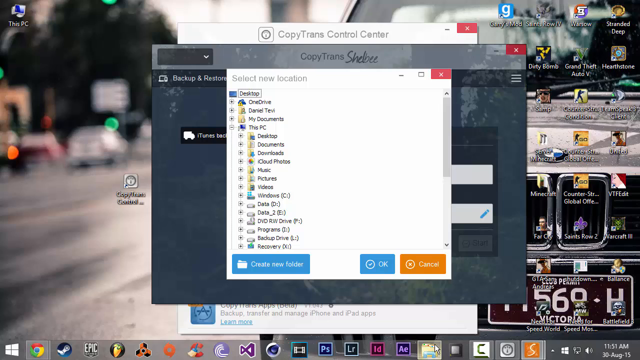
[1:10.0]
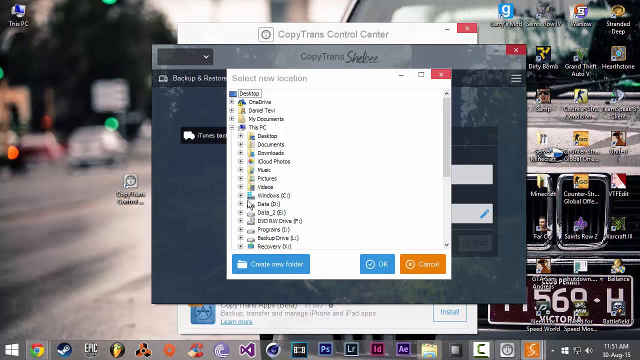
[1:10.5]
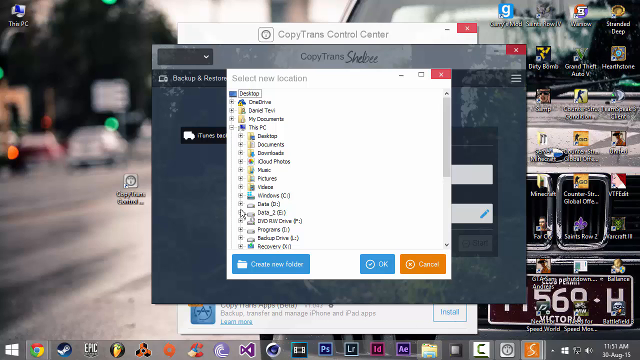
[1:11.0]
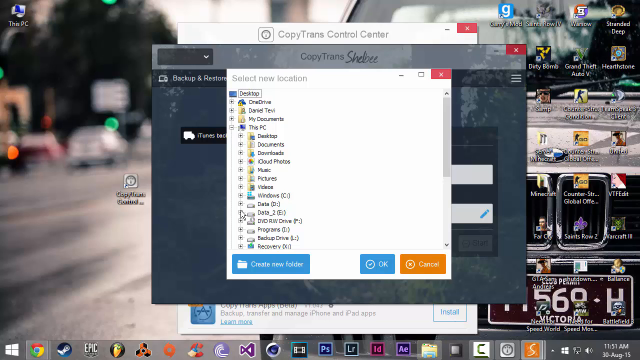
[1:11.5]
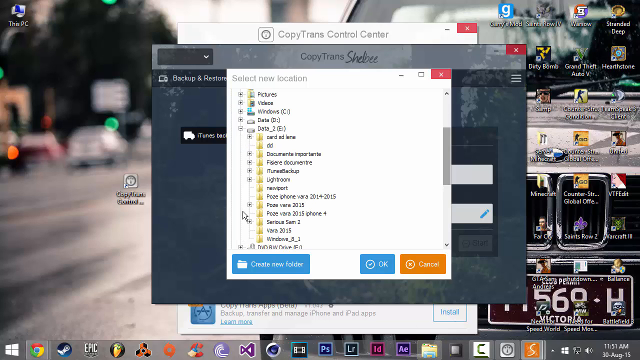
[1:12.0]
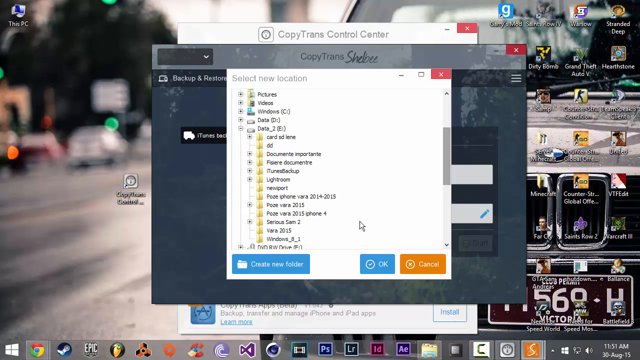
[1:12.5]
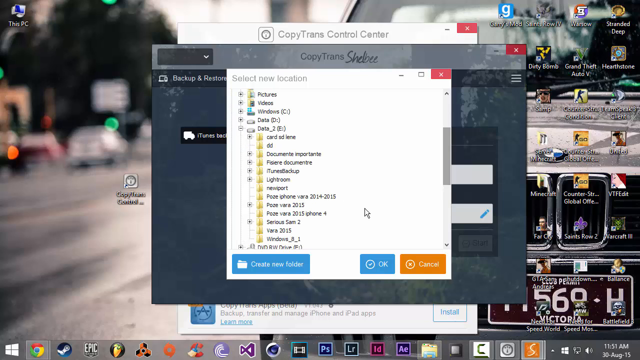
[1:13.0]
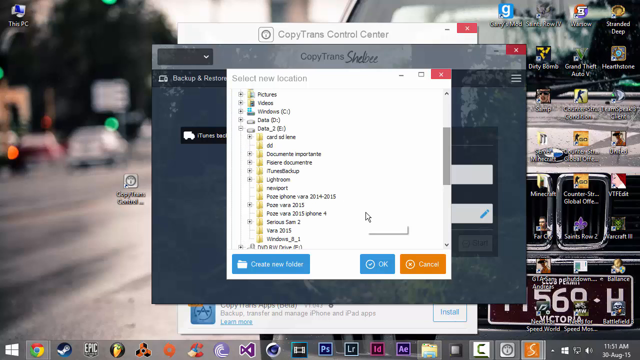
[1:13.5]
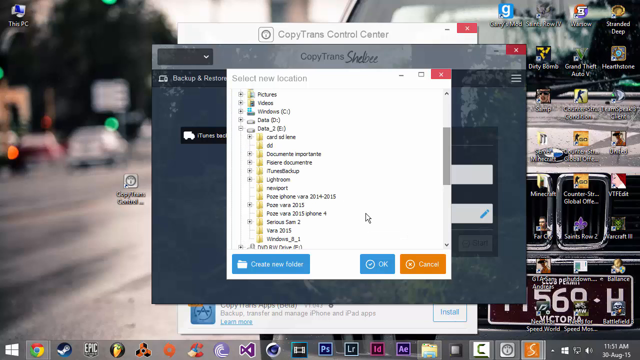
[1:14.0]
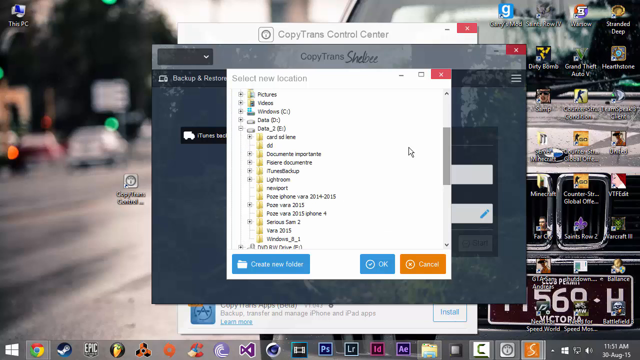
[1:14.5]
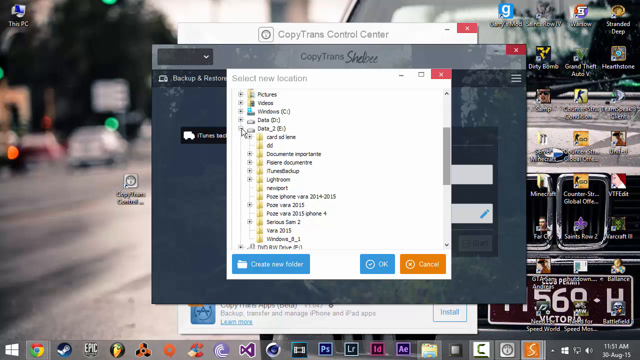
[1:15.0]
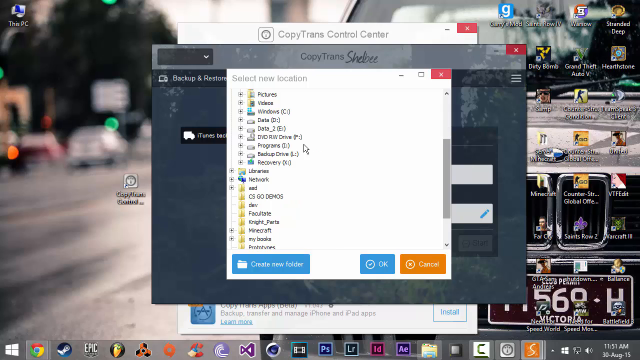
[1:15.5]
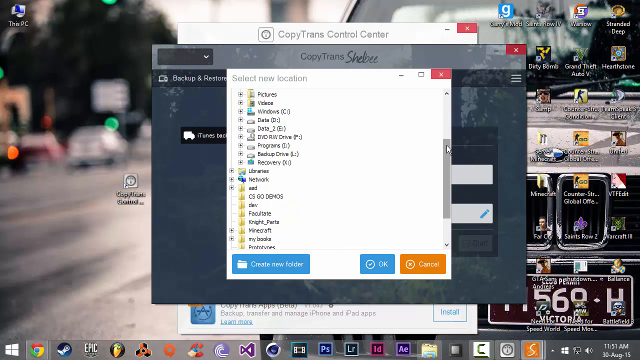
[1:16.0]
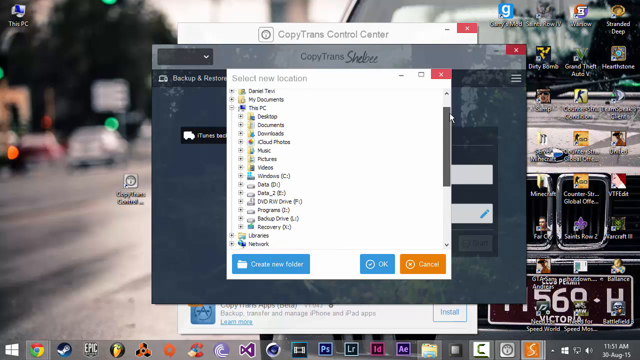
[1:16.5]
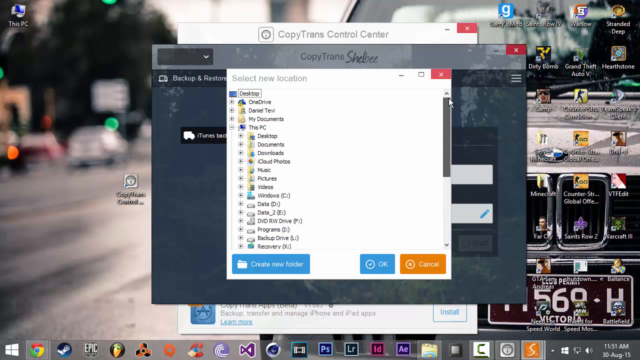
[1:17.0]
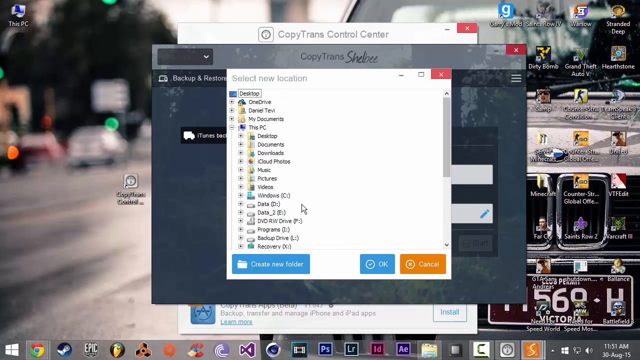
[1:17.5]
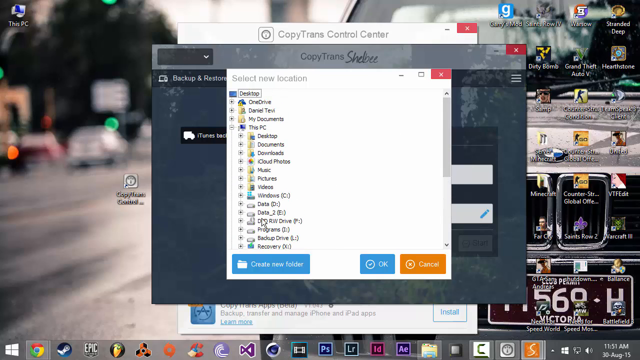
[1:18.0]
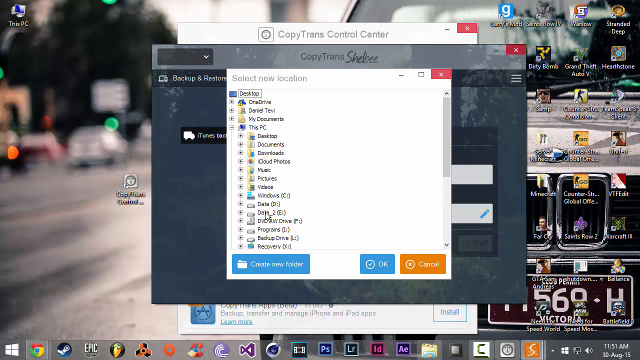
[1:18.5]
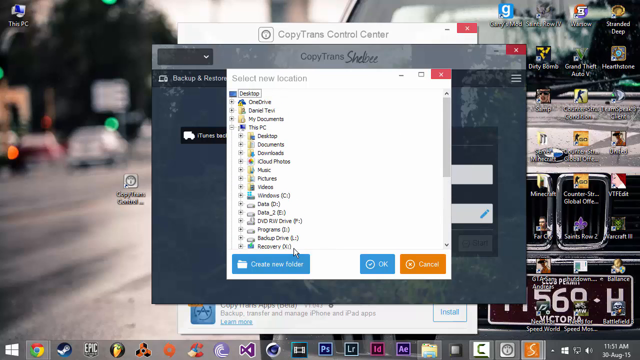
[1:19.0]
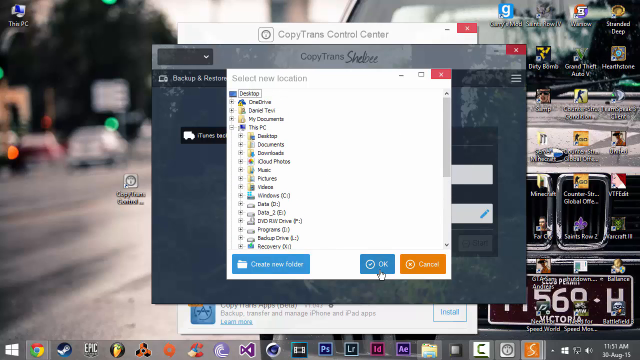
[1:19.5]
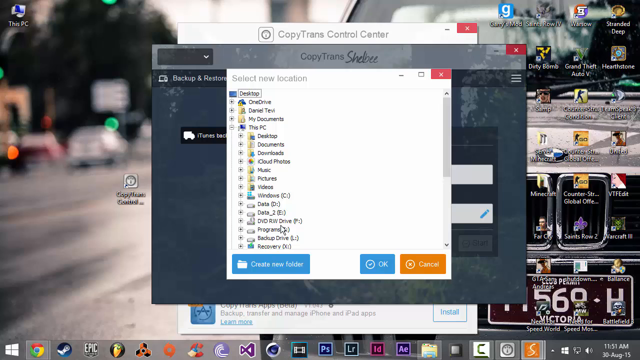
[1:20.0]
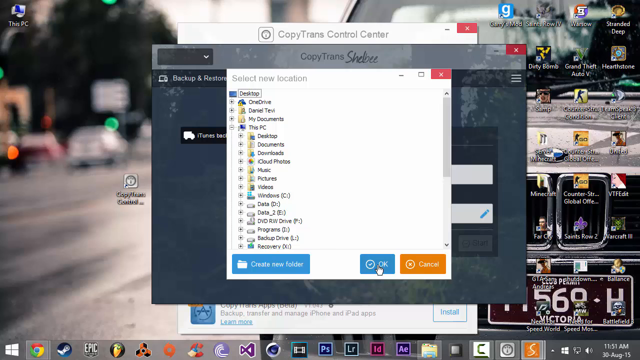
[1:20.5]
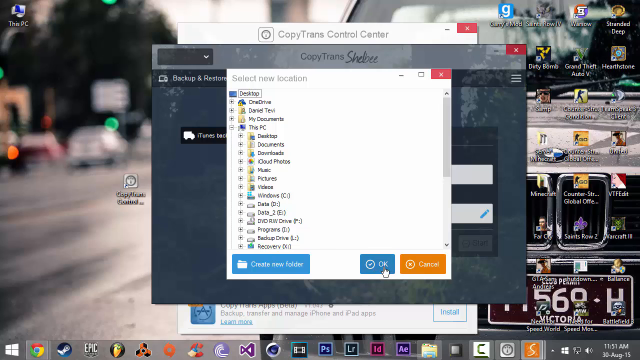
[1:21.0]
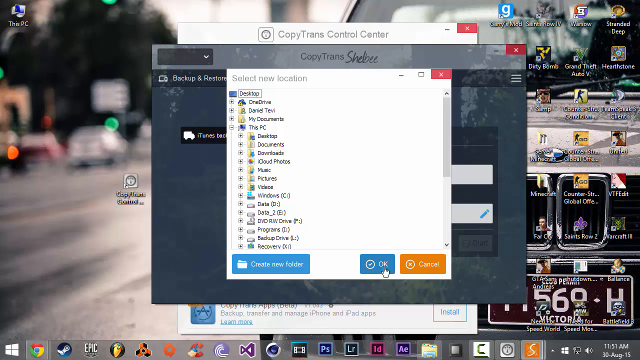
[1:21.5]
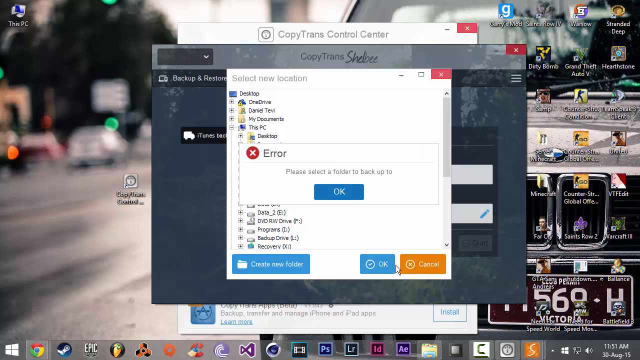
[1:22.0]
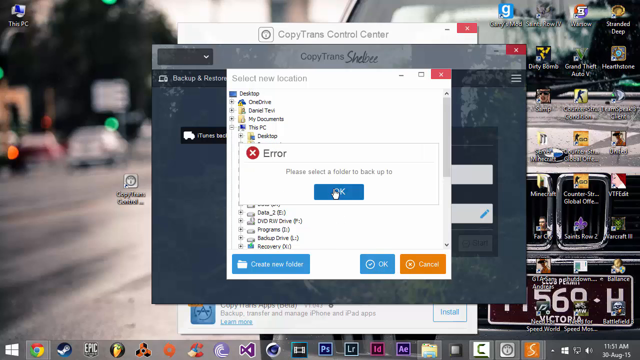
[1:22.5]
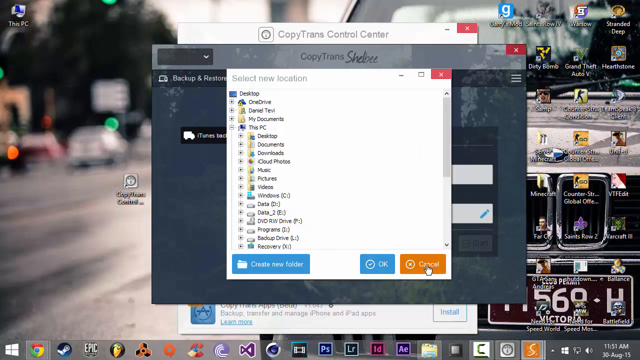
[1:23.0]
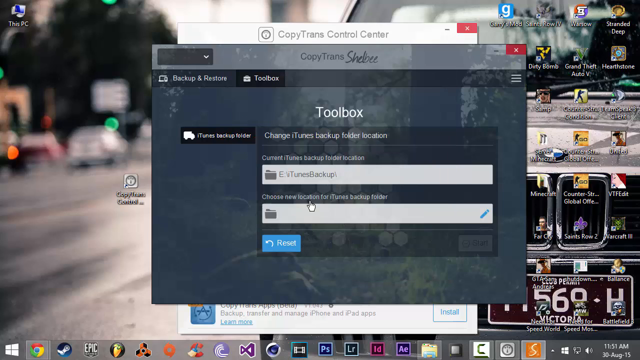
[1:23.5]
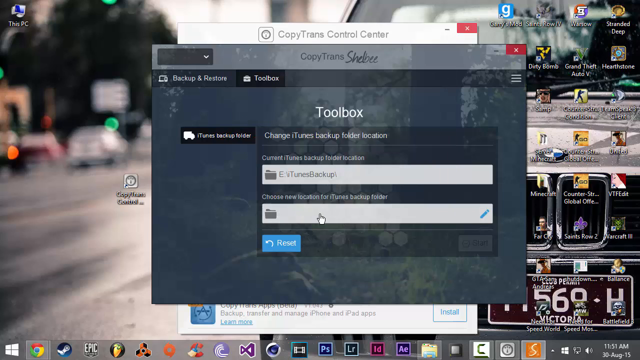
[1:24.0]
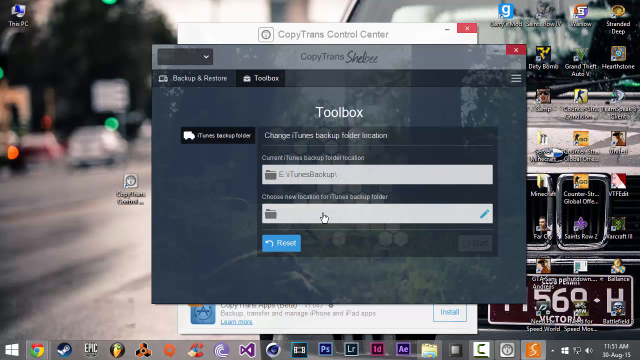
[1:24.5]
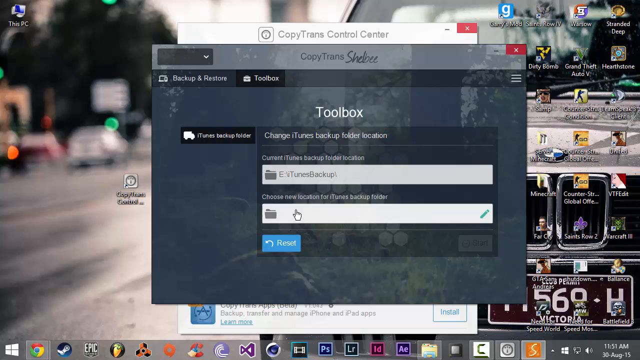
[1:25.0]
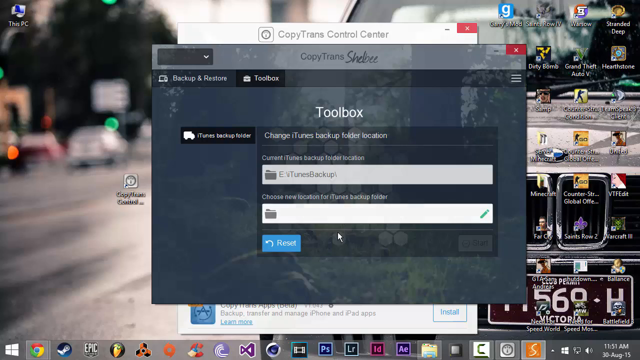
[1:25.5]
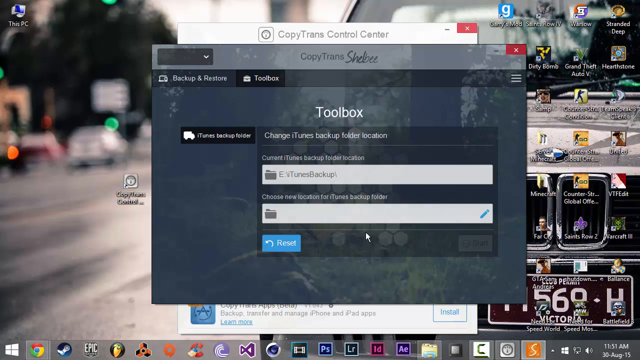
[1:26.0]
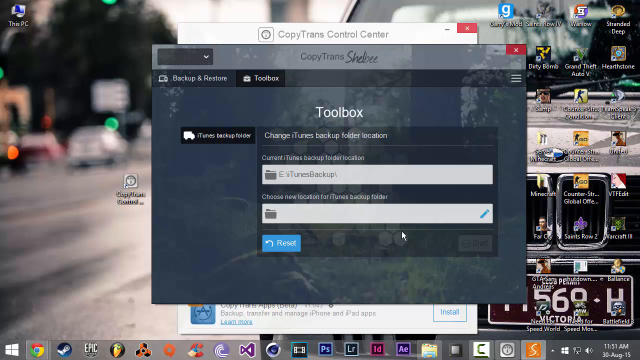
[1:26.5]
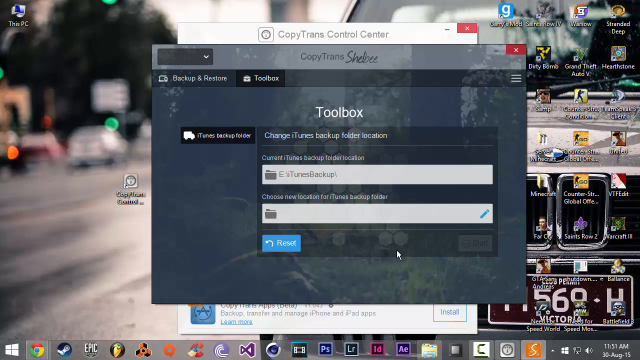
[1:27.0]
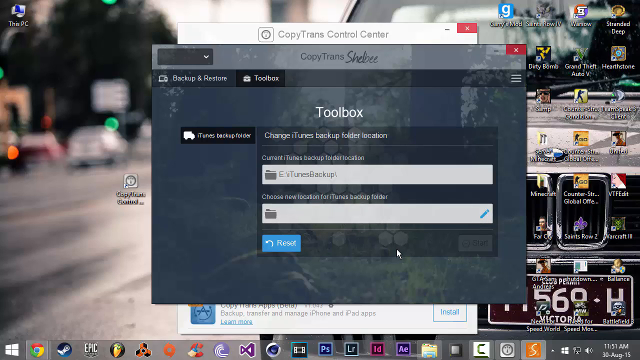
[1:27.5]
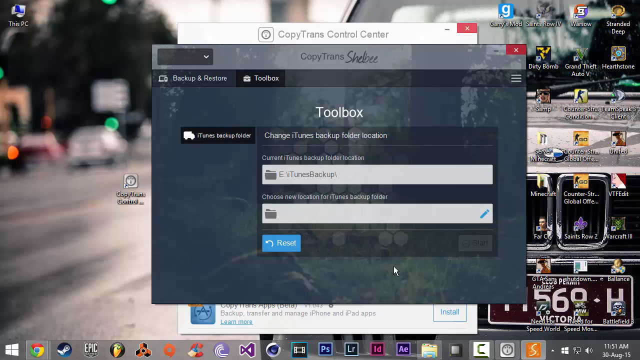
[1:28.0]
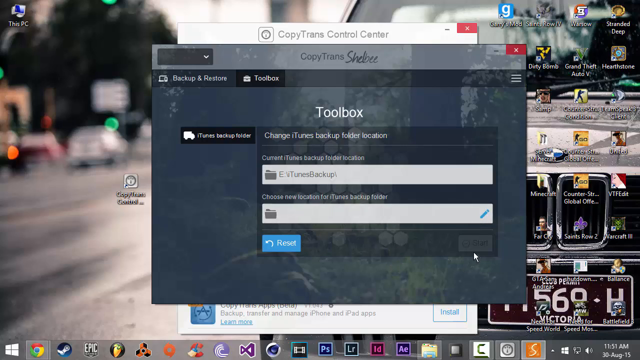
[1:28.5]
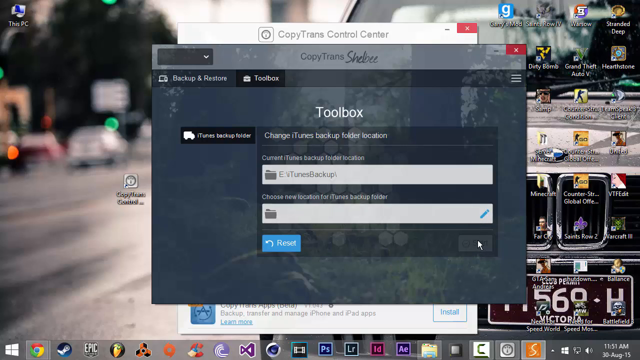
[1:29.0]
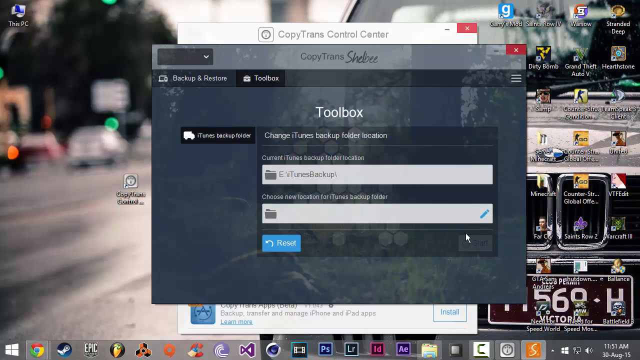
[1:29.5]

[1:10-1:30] A person's computer screen has three windows open, all kind of cascaded in front of each other. The current one has a file list, and the user seems to click on one of the options, then scrolls up a little and hovers over the options. In the lower part of the window are three buttons; two of them are blue, and another blue button says "OK". The cursor hovers over it and clicks it, and another window pops up that says "Error" with a button that says "OK". They click that, go back to the other window, and click the orange "Cancel" button. They then go back to the window that was behind it, which says "Toolbox" in white text and has two input fields, and hover over it with the cursor.